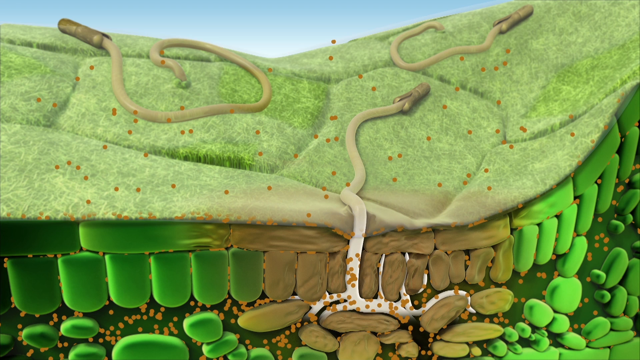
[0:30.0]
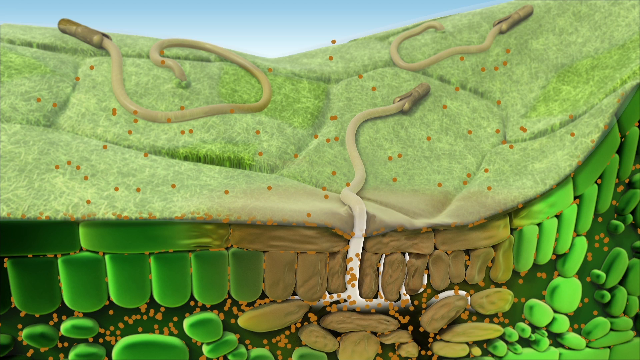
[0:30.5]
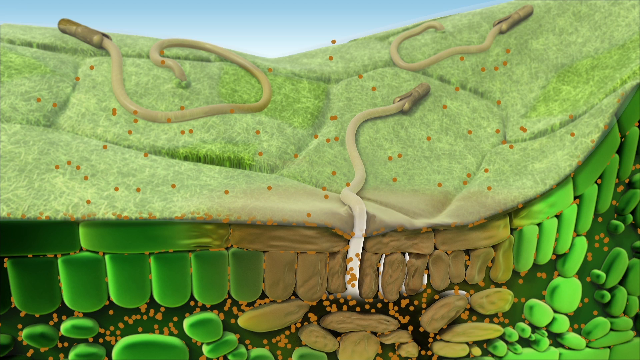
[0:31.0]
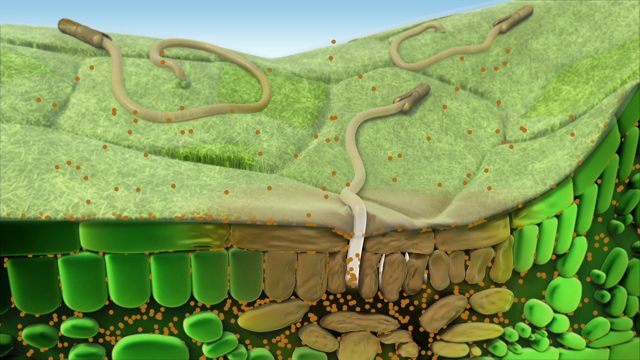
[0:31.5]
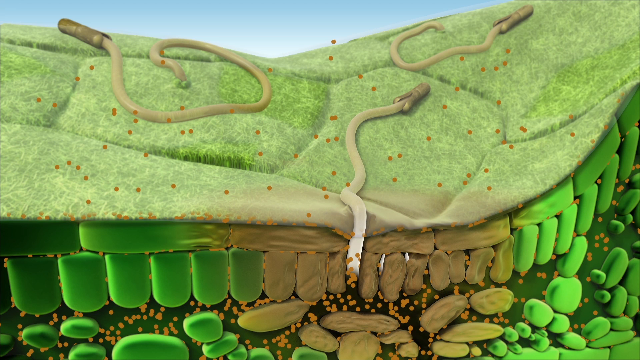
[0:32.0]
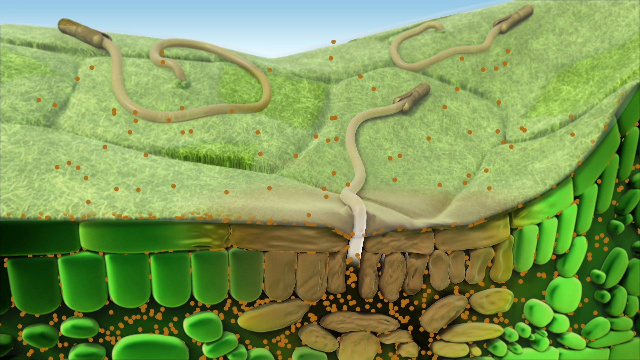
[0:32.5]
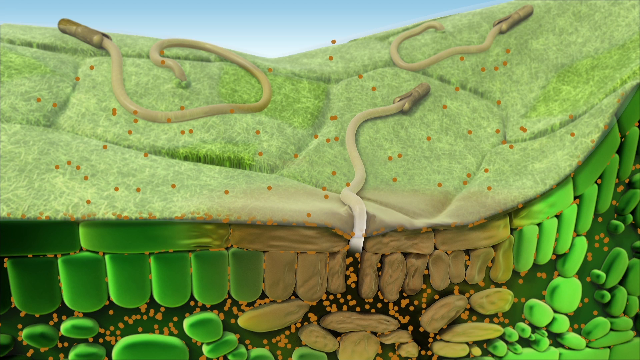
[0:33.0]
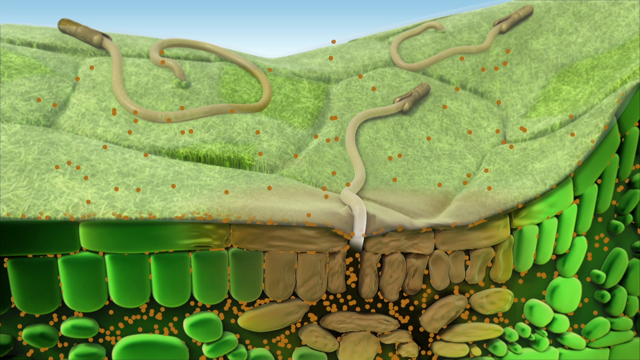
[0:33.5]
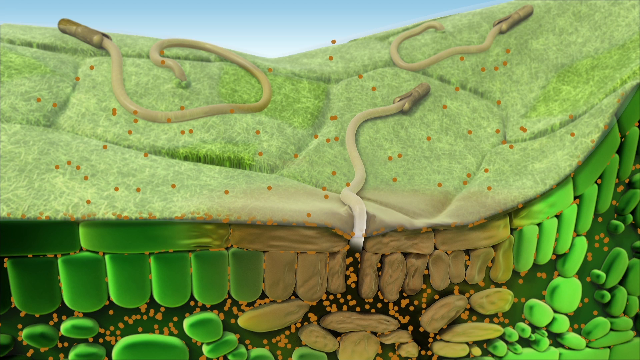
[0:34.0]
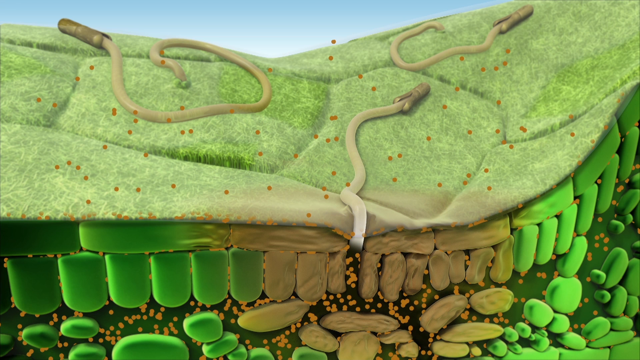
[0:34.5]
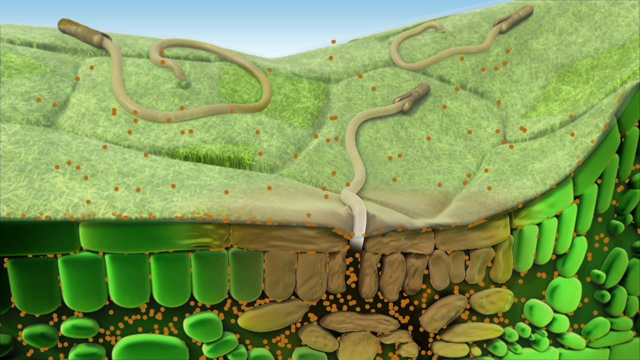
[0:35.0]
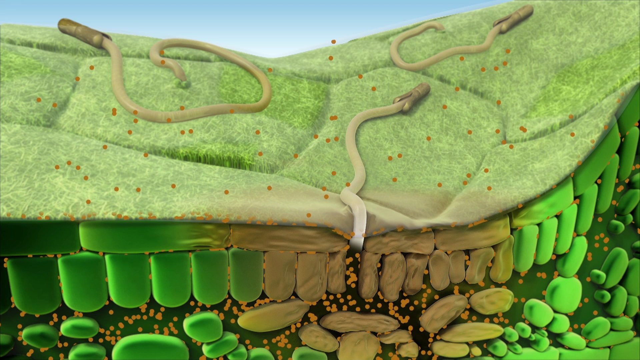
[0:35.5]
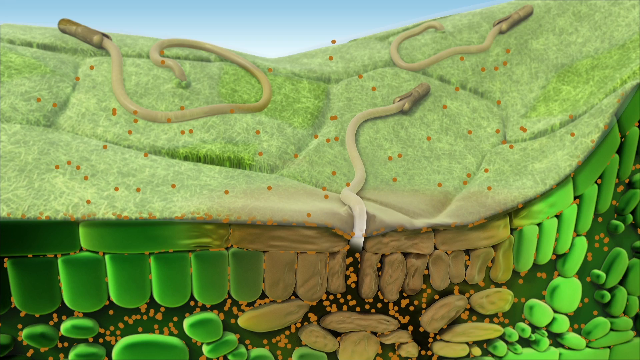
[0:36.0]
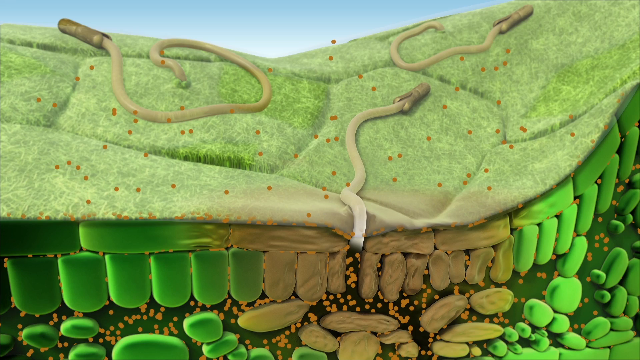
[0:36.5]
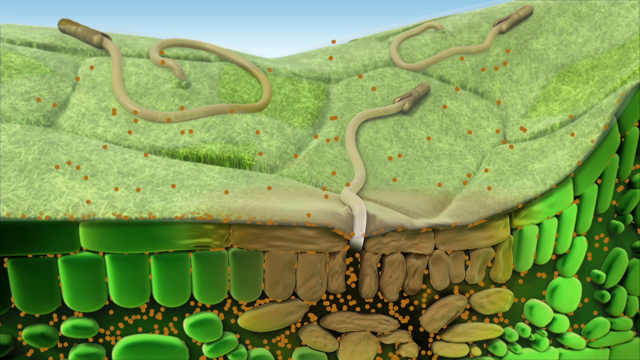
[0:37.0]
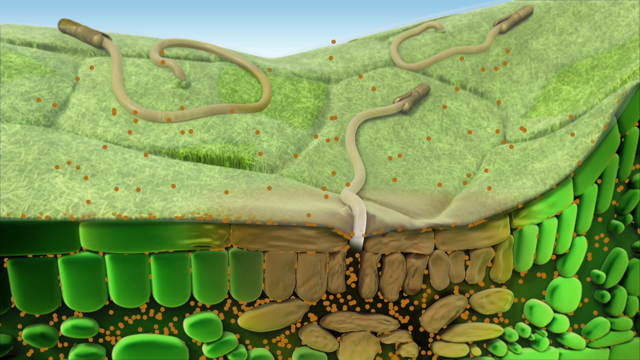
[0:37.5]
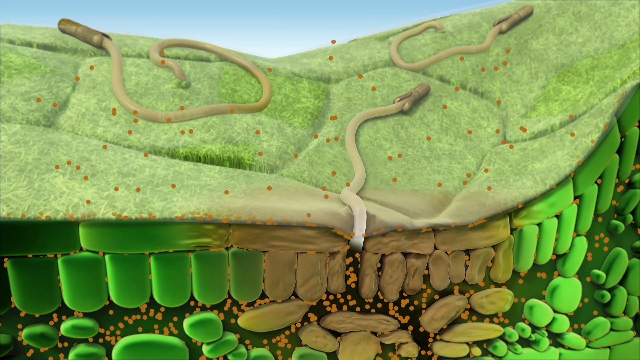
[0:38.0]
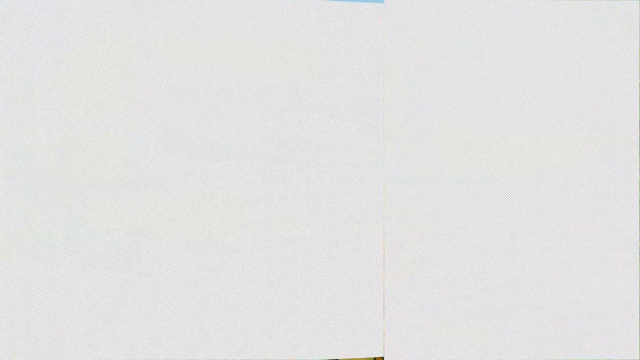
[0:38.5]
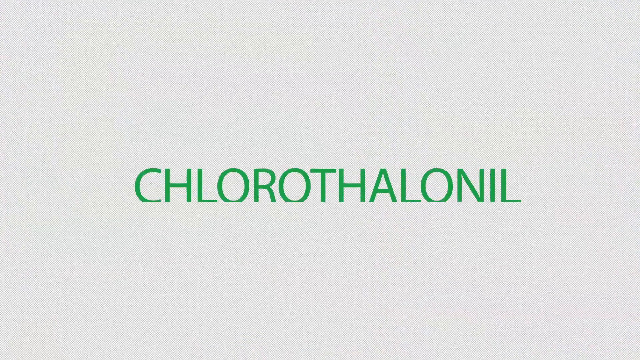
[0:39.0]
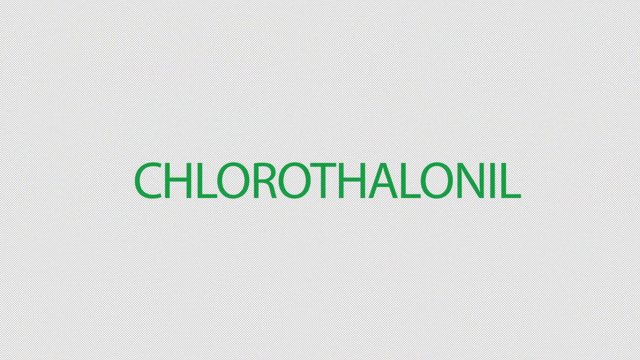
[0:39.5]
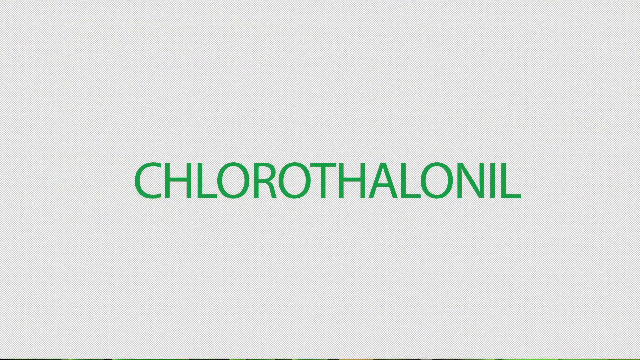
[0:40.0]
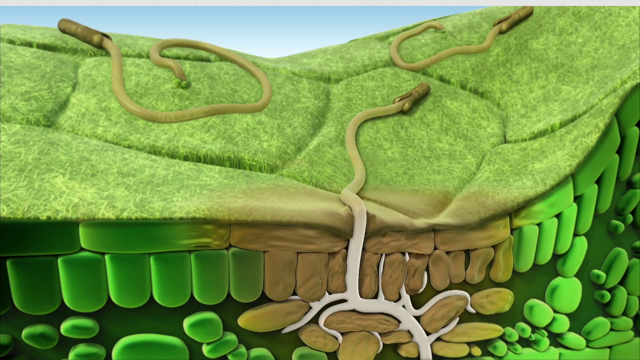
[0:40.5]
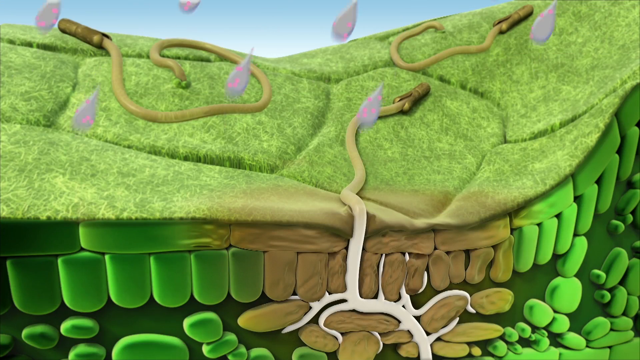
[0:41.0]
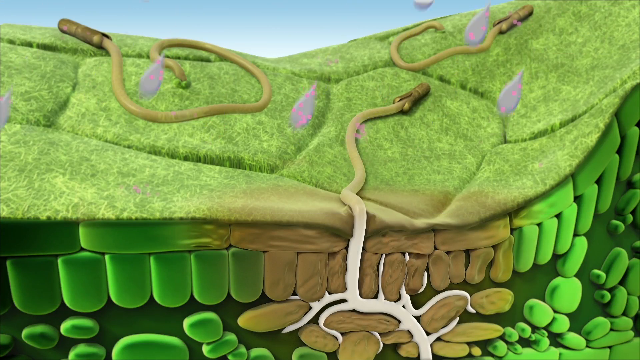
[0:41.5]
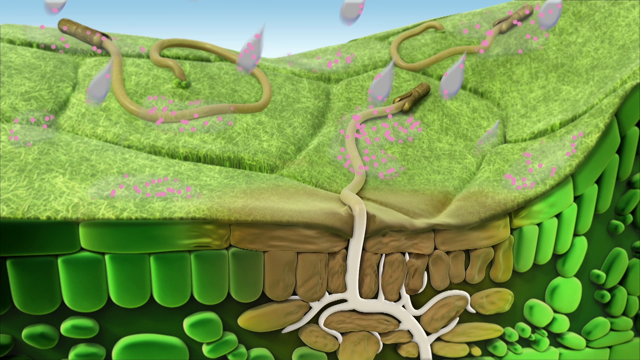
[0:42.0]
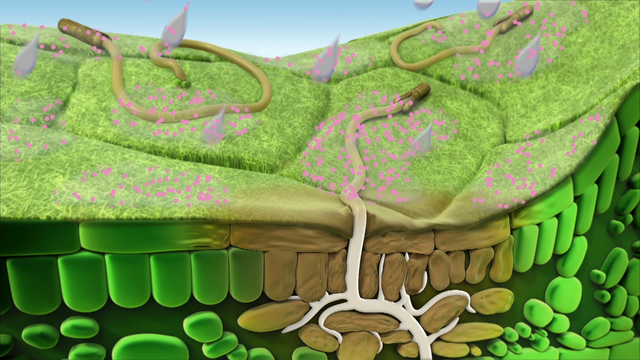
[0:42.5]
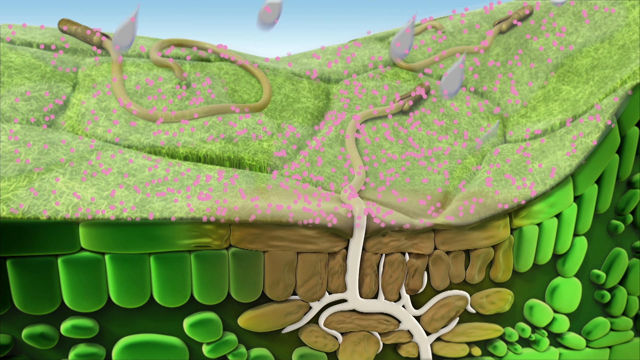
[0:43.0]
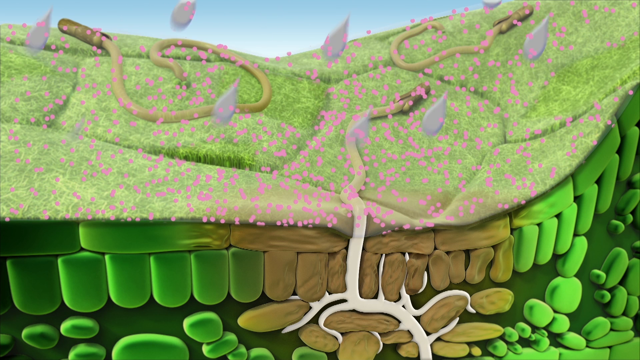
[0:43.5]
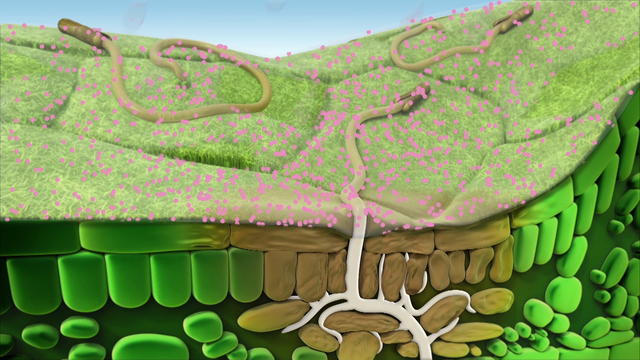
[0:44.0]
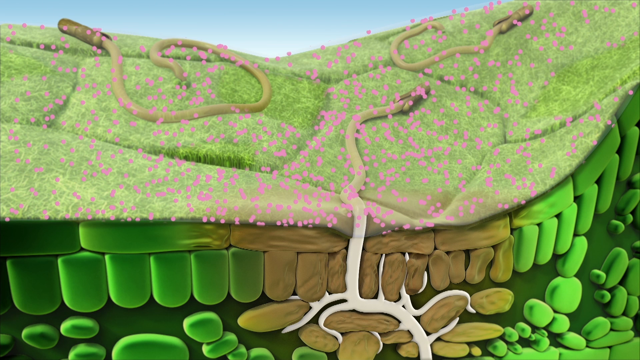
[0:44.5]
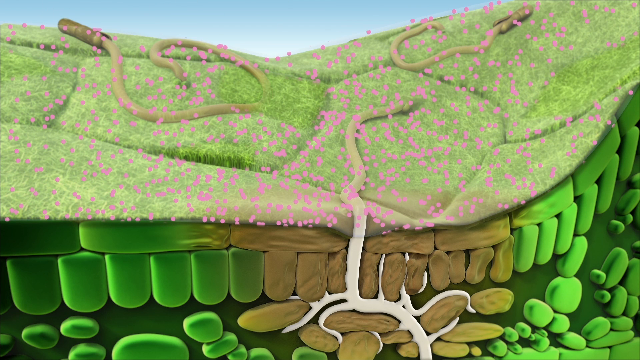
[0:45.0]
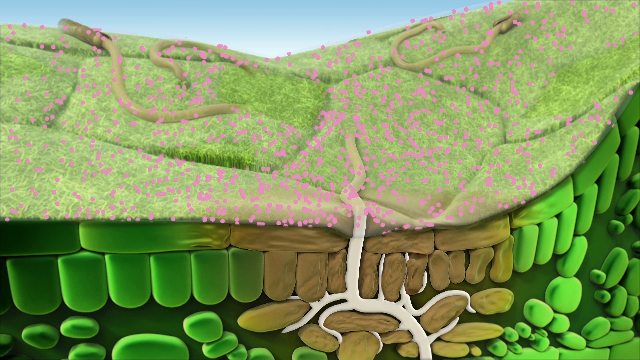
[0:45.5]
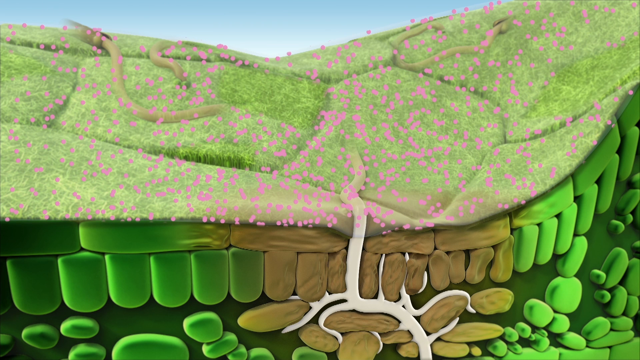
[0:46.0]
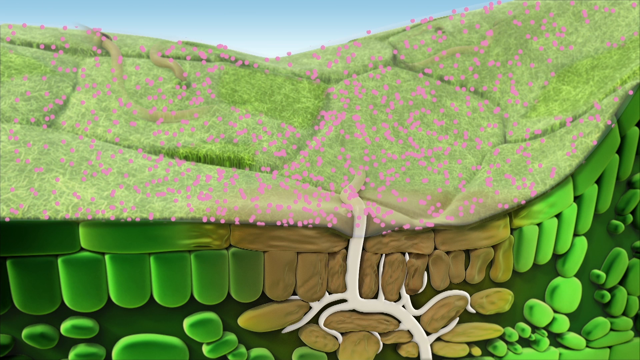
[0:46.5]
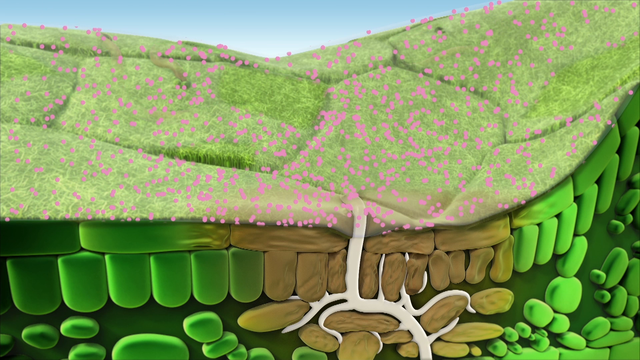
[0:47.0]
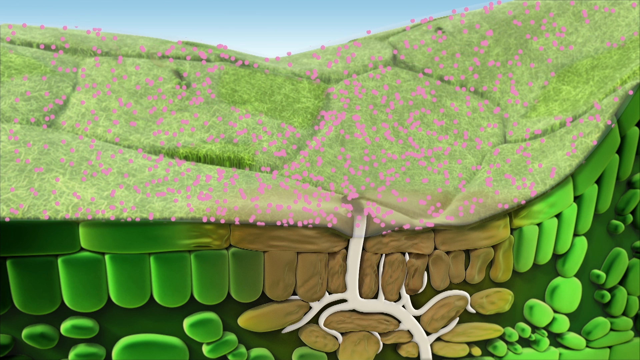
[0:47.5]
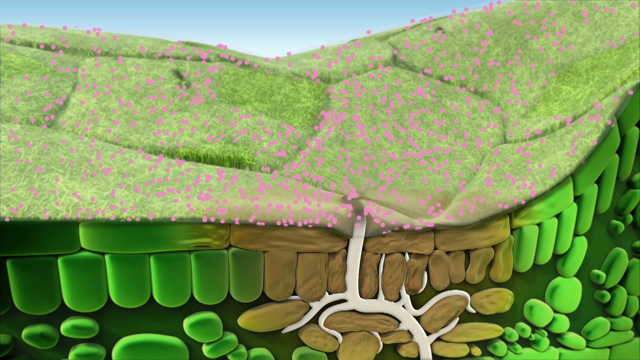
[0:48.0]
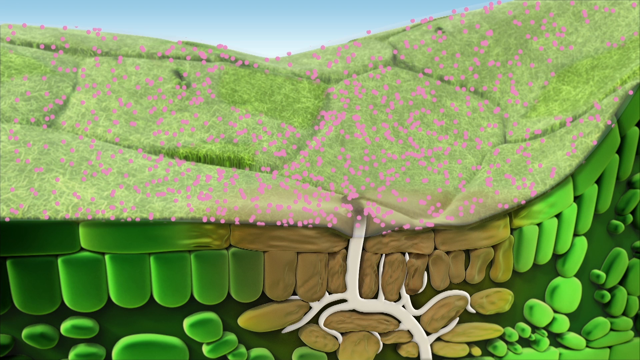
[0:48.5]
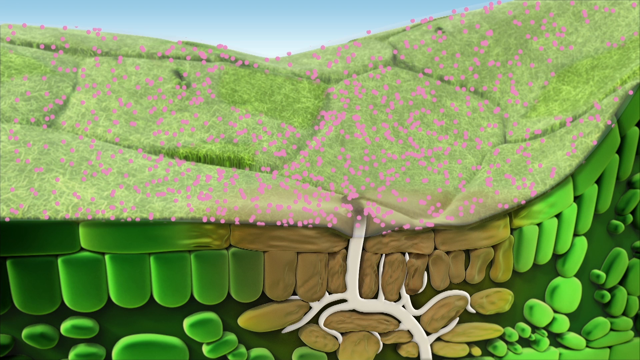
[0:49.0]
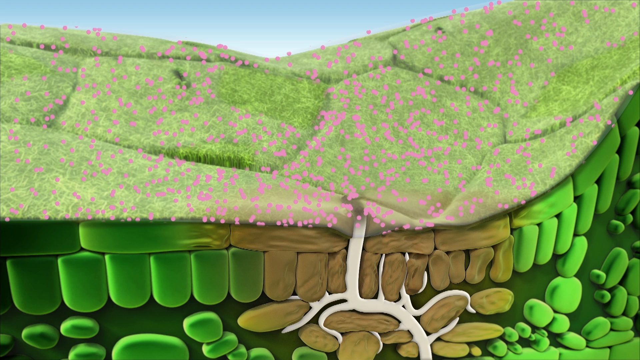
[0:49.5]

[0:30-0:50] In the diagram, a white, liney, kind of snake-looking object flows from the ground up towards the surface. A title screen with green text on a white background appears again, saying "chlorothalonil". The diagram is then repeated with rainwater droplets hitting the green earth, and this time there are pink dots instead of brown dots, apparently representing a different chemical, possibly the one named on the title screen. This appears to be good for the land, and the snake-like structures on the green earth disappear after a few seconds. Before the title screen, the brown dots are visible on and beneath the earth; afterwards, only the pink dots are visible, which apparently represent chlorothalonil.